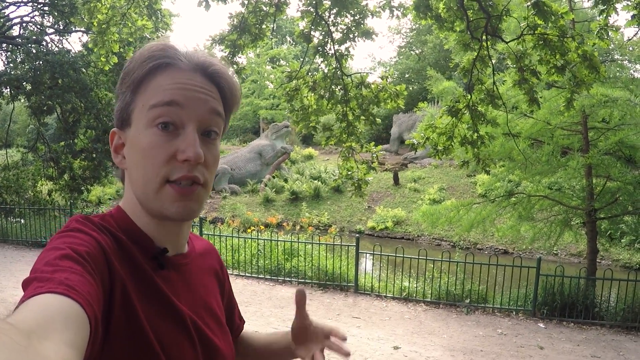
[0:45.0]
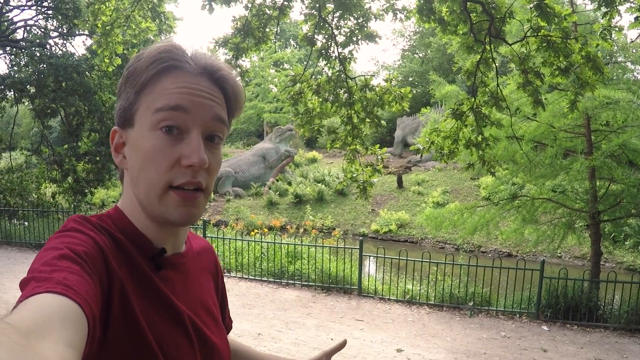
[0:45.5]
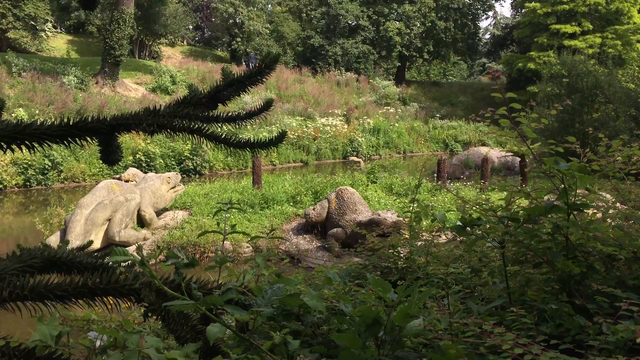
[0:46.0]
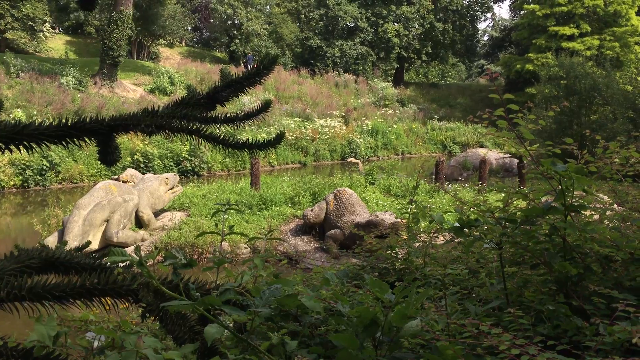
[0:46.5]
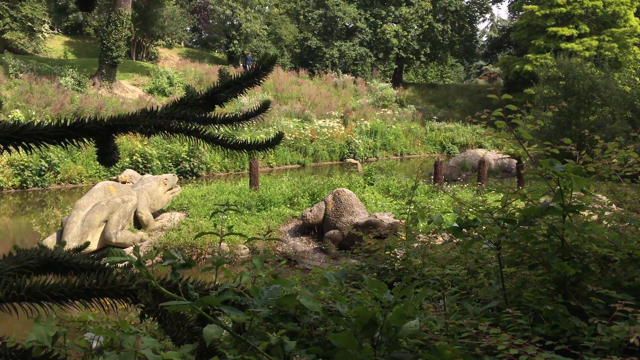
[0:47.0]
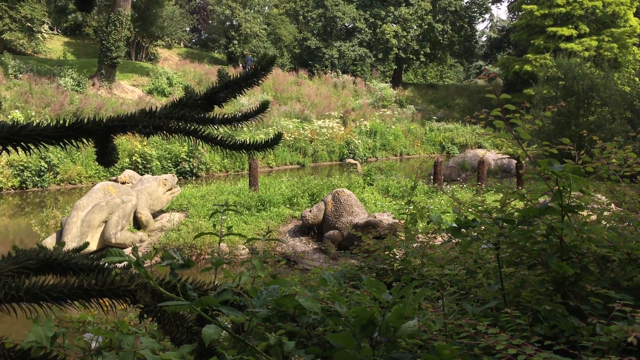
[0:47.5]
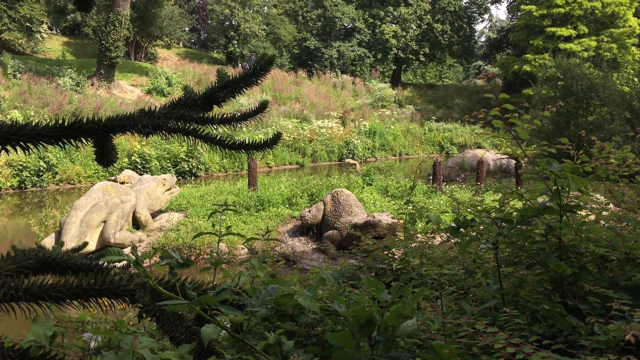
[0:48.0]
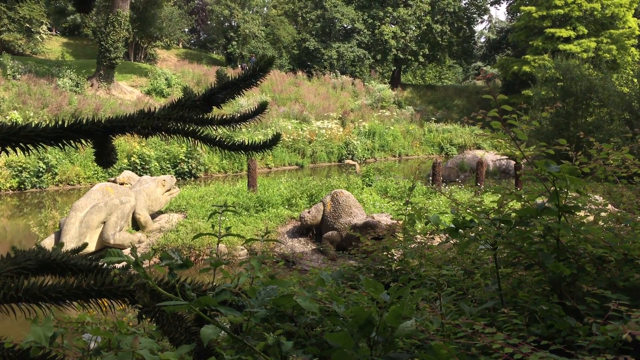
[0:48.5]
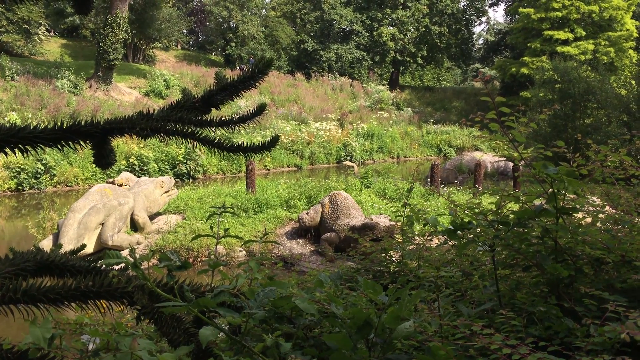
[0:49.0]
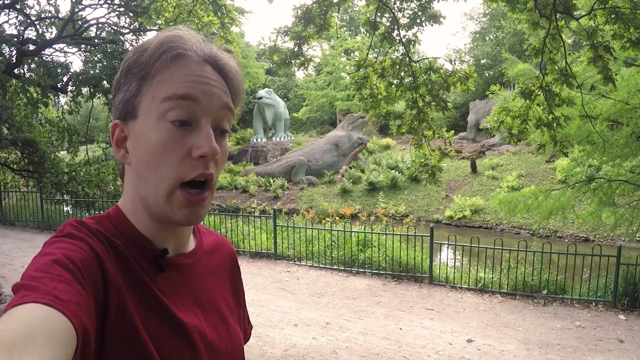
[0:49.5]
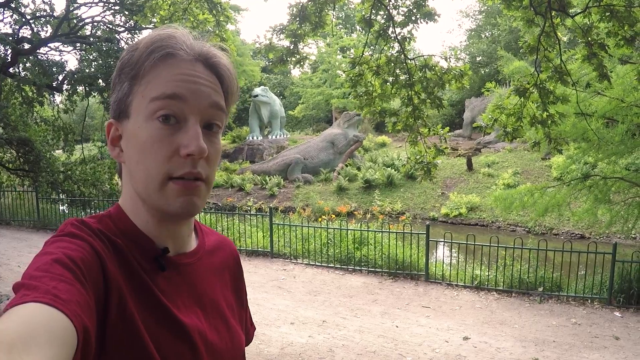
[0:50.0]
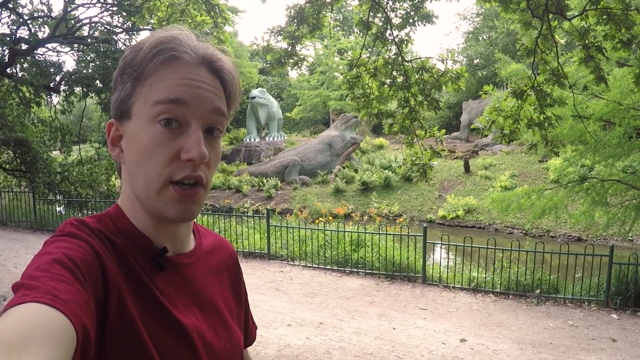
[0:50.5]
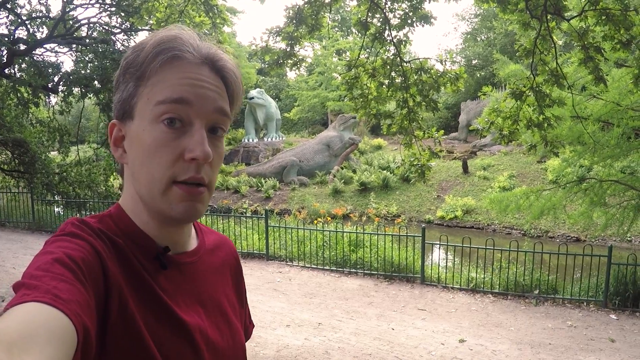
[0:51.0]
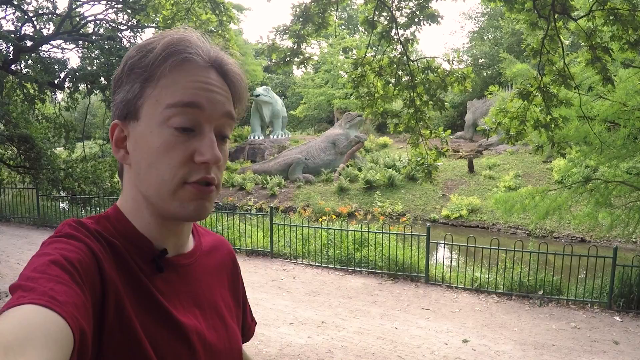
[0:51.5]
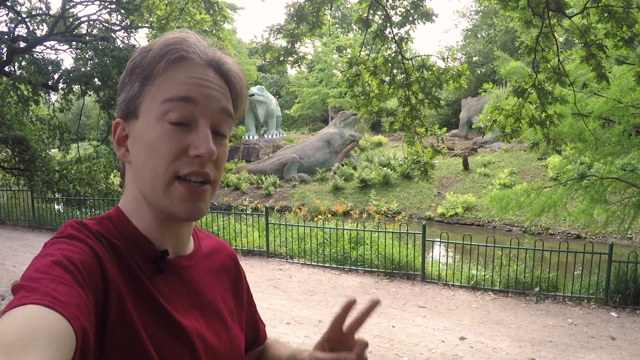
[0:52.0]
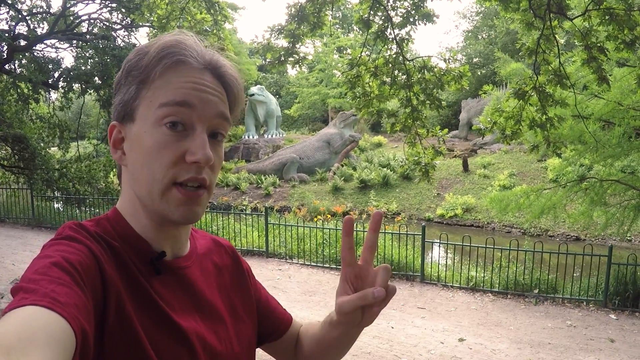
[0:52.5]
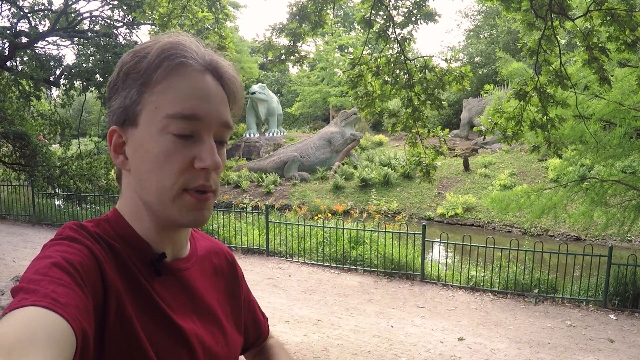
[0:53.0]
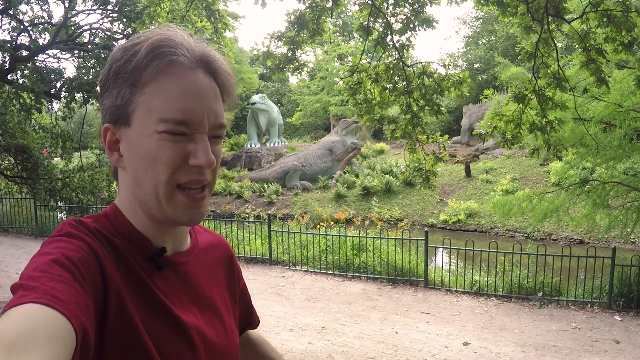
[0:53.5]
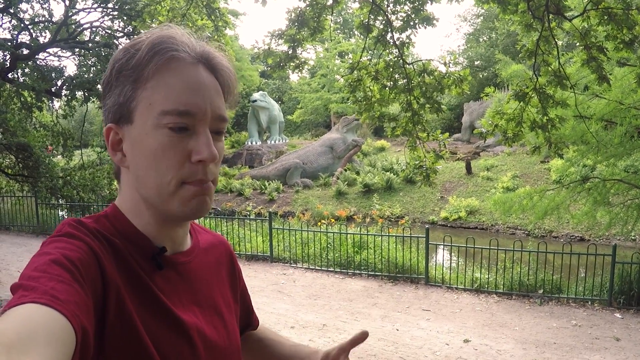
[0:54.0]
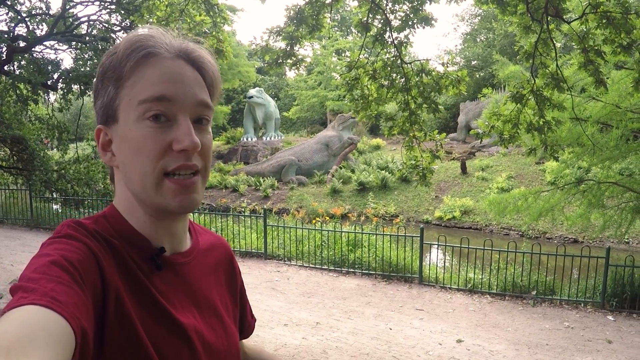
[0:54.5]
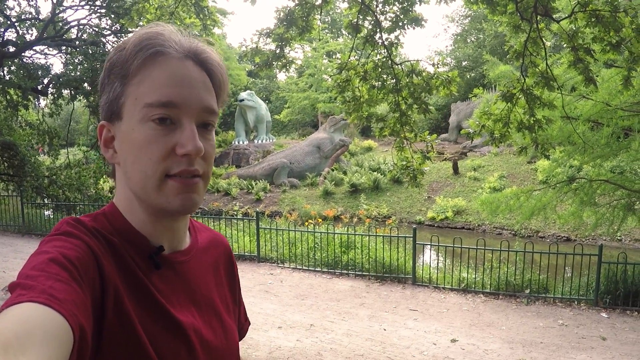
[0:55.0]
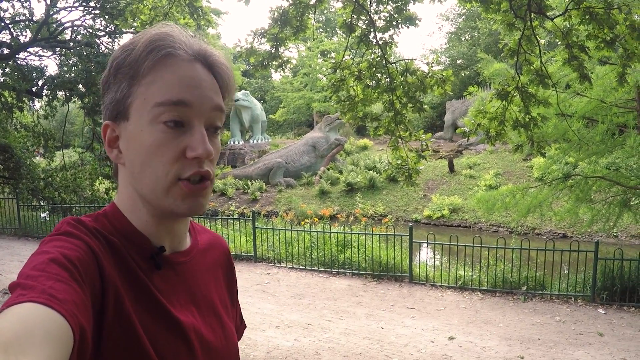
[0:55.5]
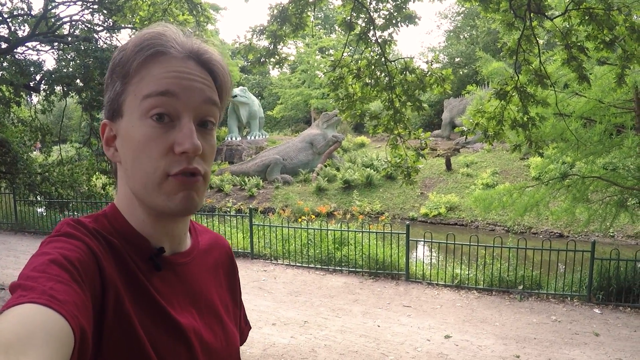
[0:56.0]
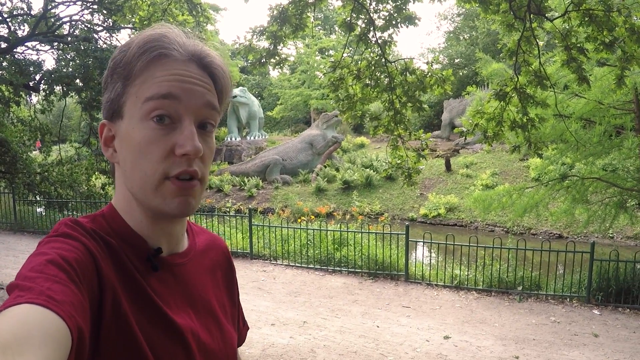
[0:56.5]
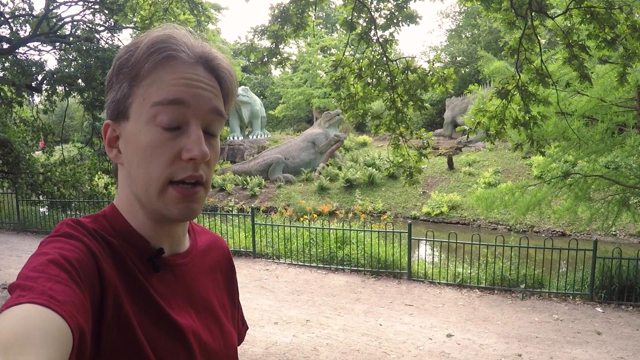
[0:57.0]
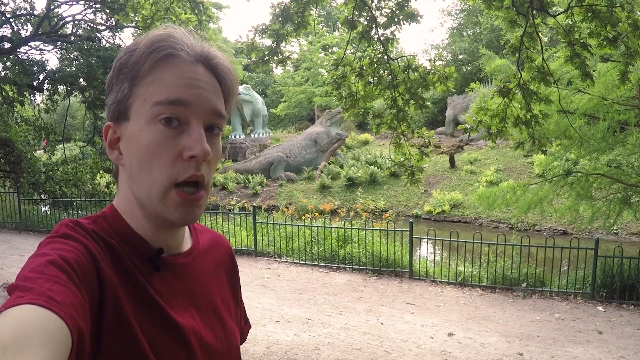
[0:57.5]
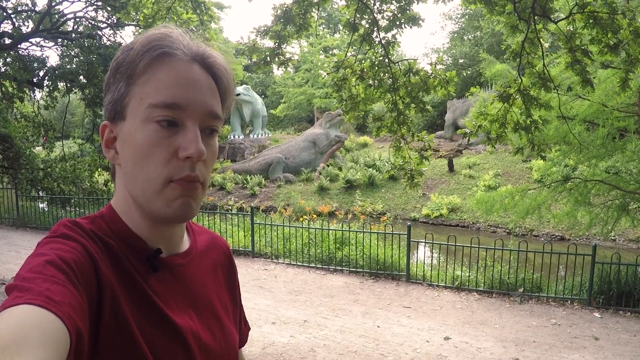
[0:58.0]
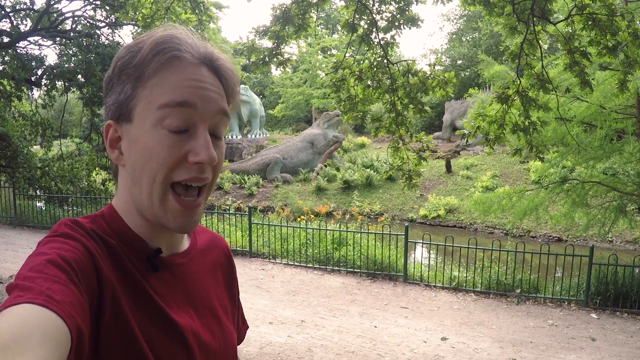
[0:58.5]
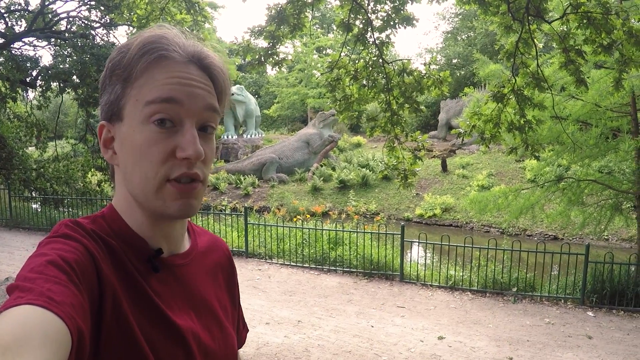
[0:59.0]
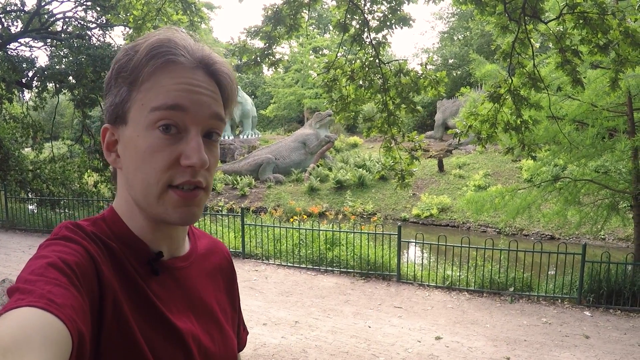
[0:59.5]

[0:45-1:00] The presenter speaks to the camera. He is a man with short blonde hair that is slightly dark in the back, wearing a short-sleeved red t-shirt. He is holding what is presumably a camera phone or a camera in one hand in front of him and gesturing with the other. He is standing on a paved walkway in an outdoor park with real-life-sized dinosaur statues behind him in a lush green setting. The video briefly switches to a close-up of some of those statues, which look almost like alligators; they are flat and sitting in a grassy park, with some water on one side of the display. It switches back to the presenter, who makes a gesture with one hand that looks like he is holding up two fingers to indicate a number, then keeps speaking and staring directly at the camera. It is sunny in the park, a very lush park with grass covering the display behind him and trees everywhere.